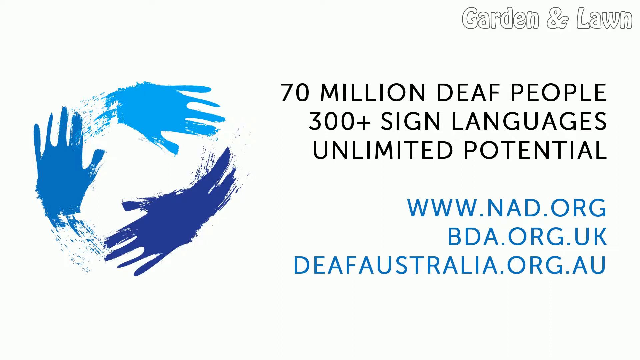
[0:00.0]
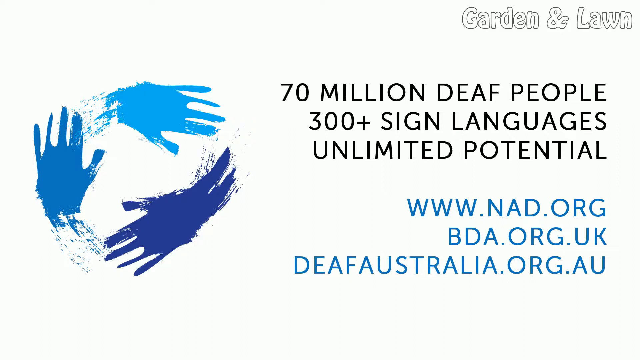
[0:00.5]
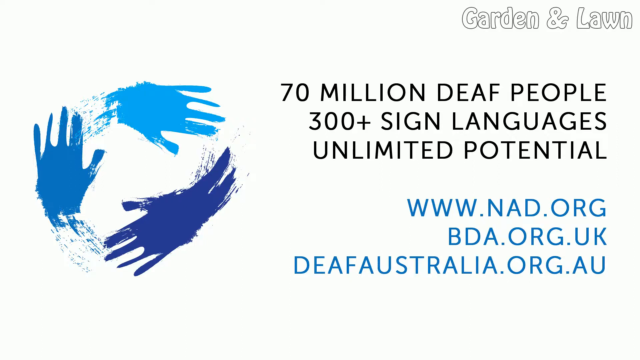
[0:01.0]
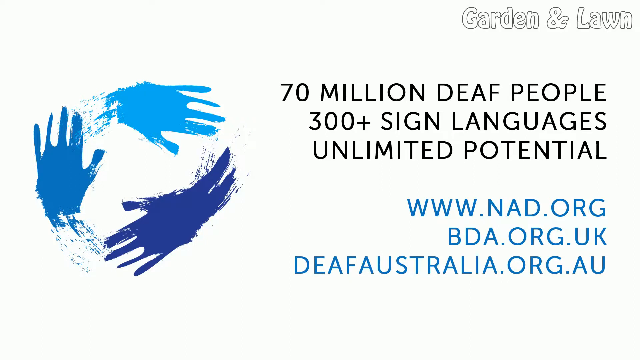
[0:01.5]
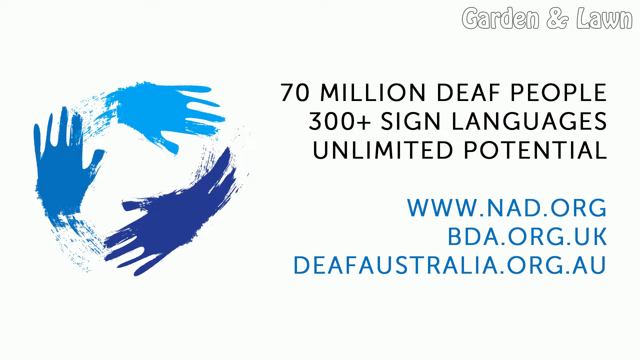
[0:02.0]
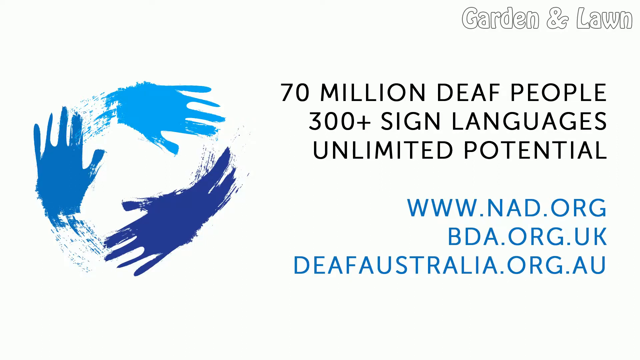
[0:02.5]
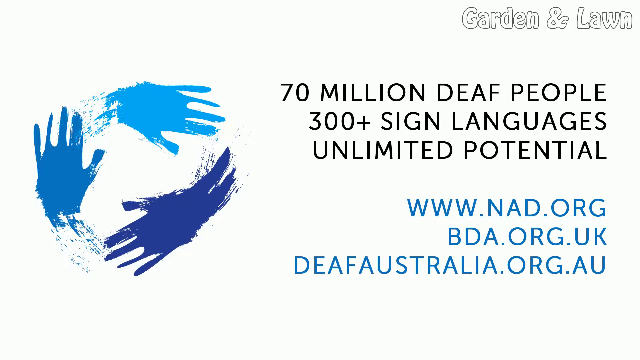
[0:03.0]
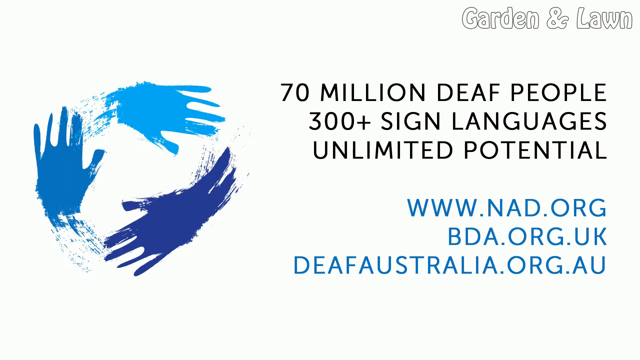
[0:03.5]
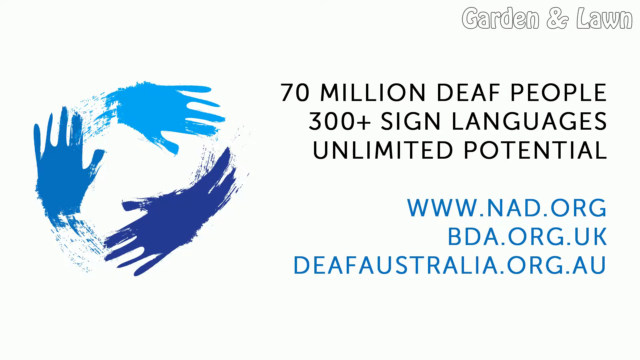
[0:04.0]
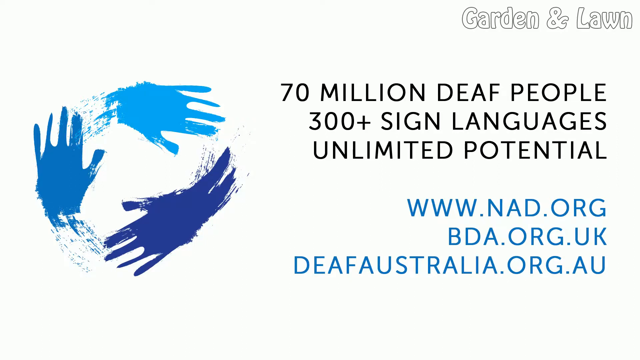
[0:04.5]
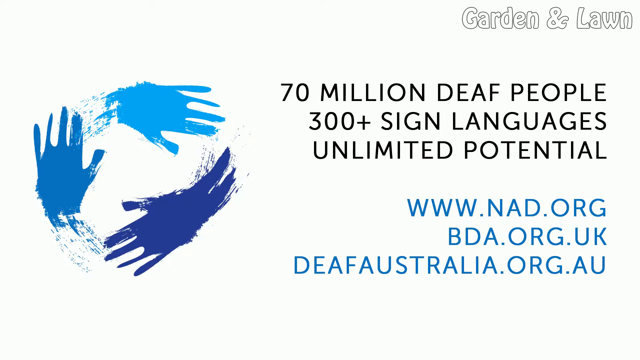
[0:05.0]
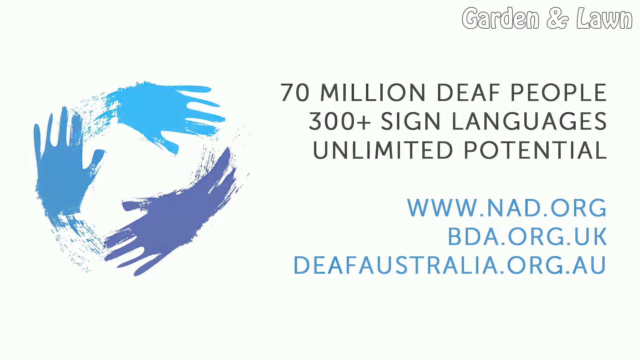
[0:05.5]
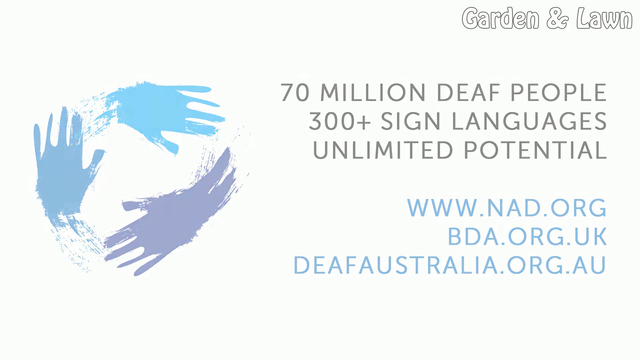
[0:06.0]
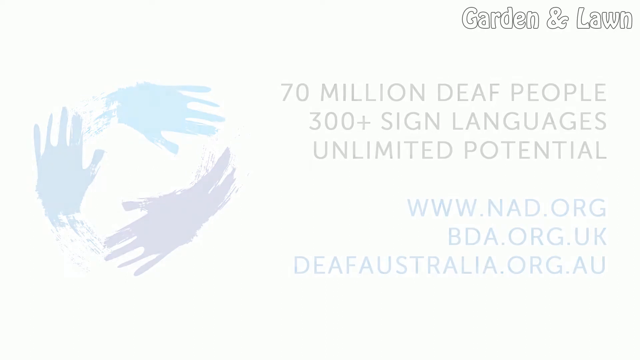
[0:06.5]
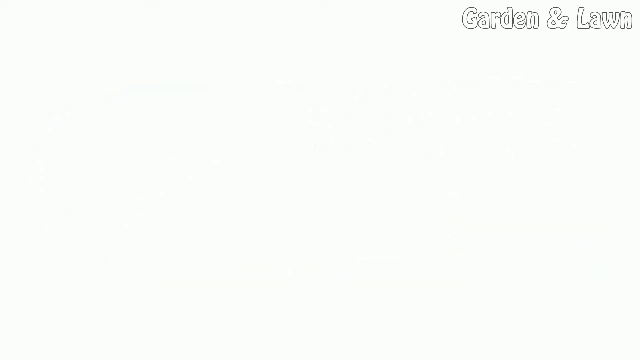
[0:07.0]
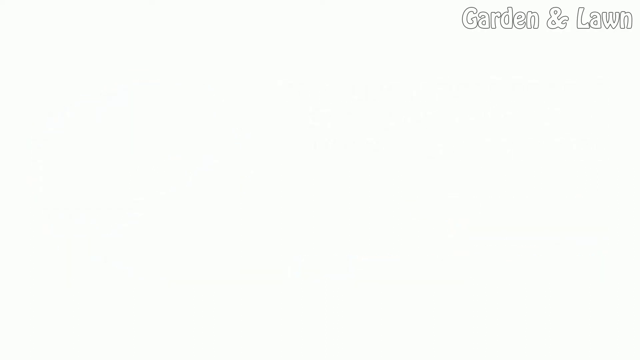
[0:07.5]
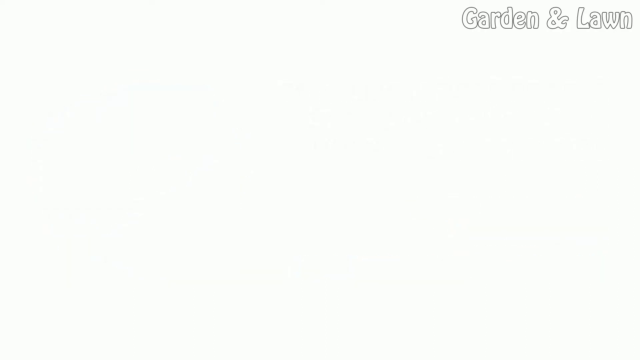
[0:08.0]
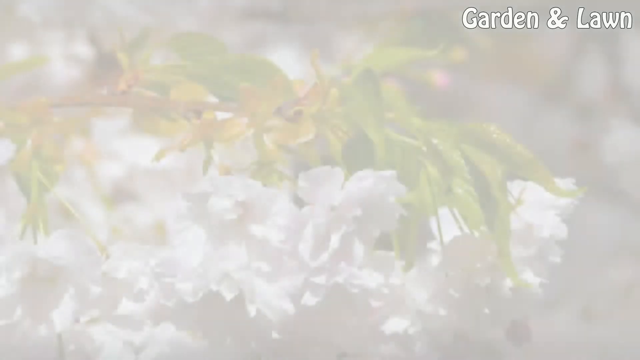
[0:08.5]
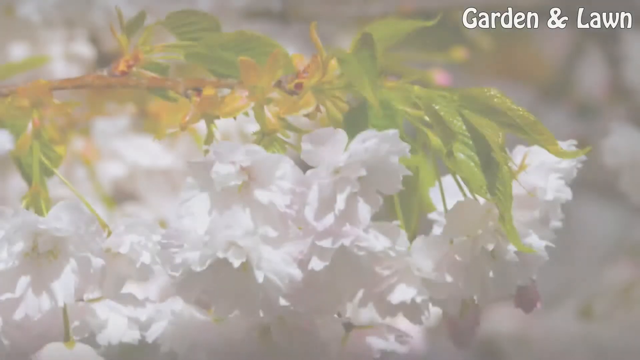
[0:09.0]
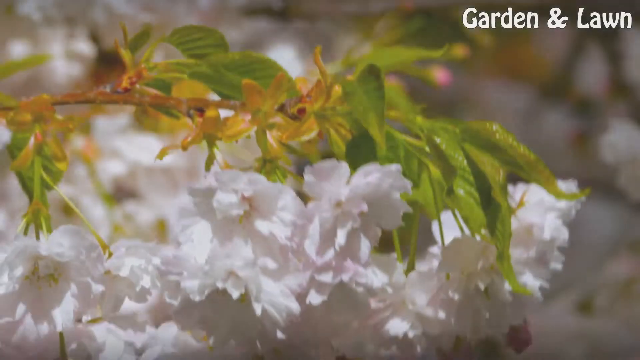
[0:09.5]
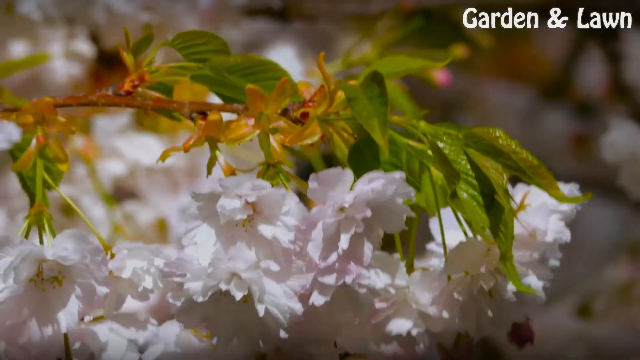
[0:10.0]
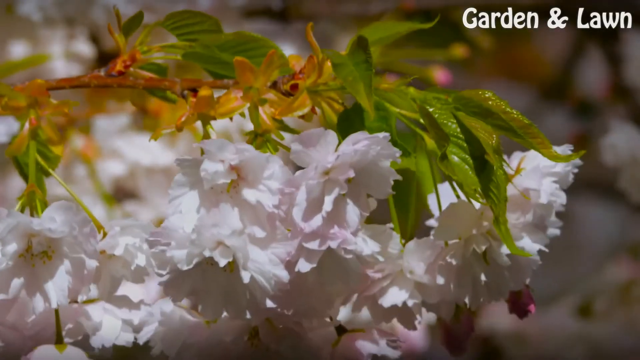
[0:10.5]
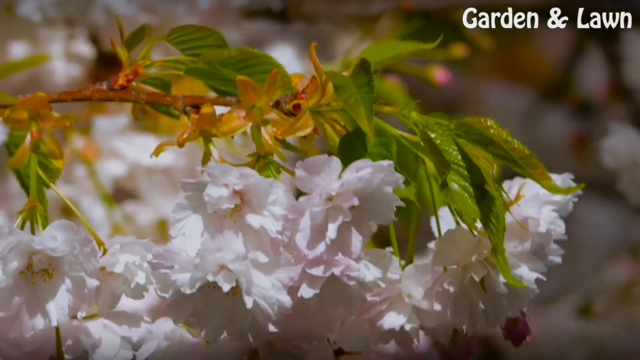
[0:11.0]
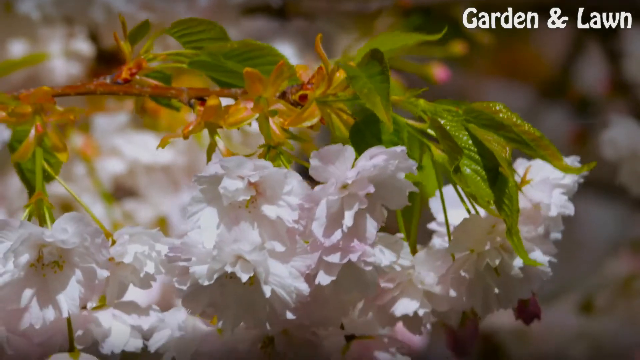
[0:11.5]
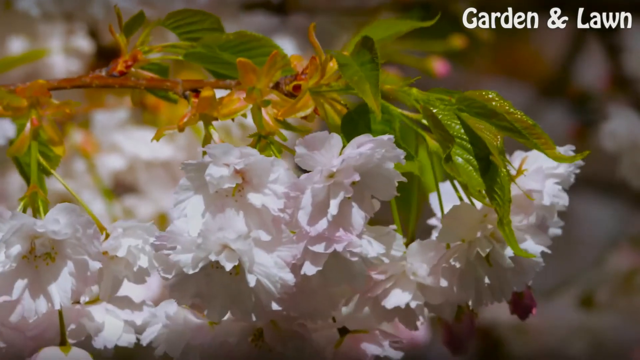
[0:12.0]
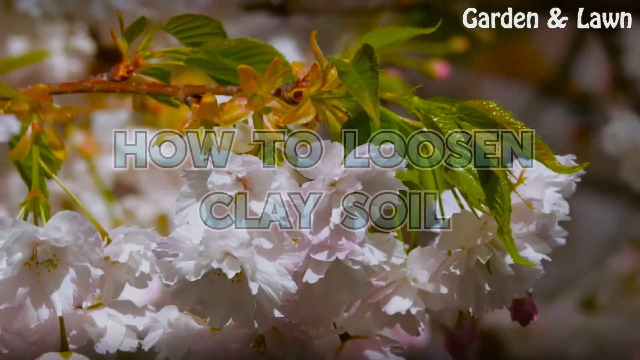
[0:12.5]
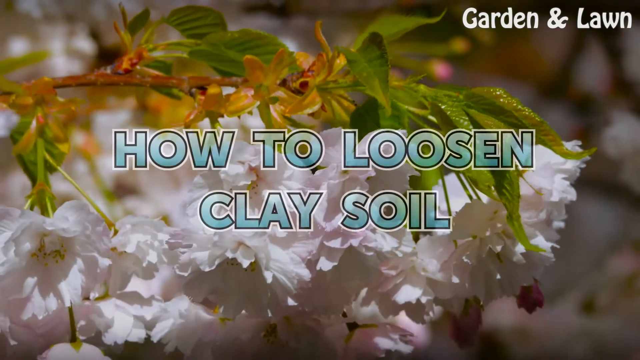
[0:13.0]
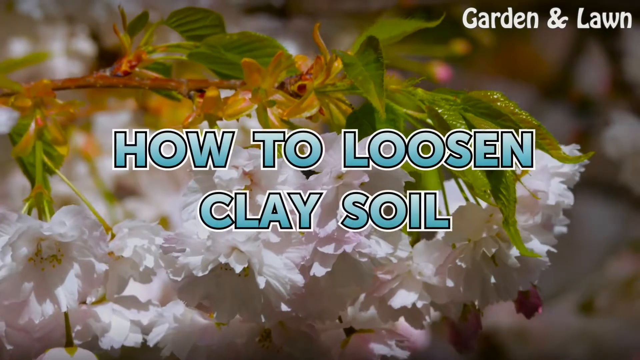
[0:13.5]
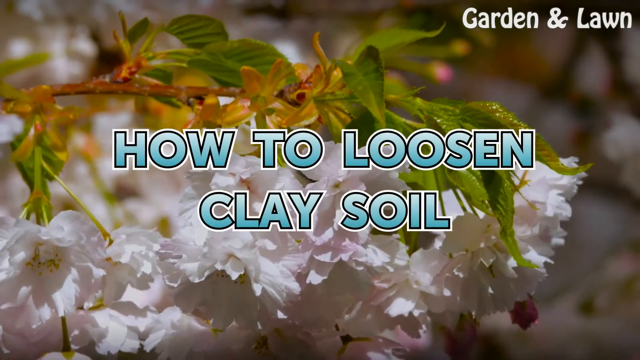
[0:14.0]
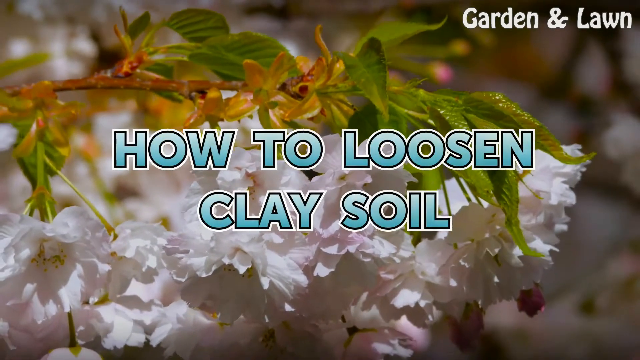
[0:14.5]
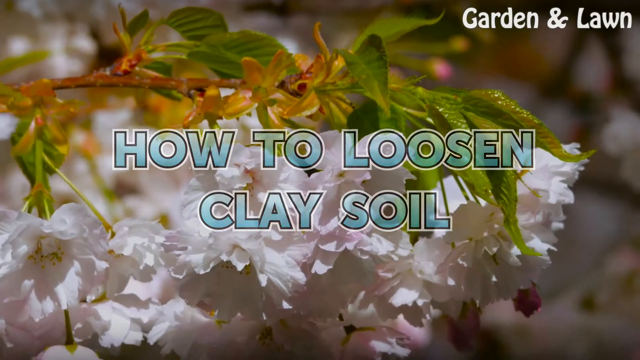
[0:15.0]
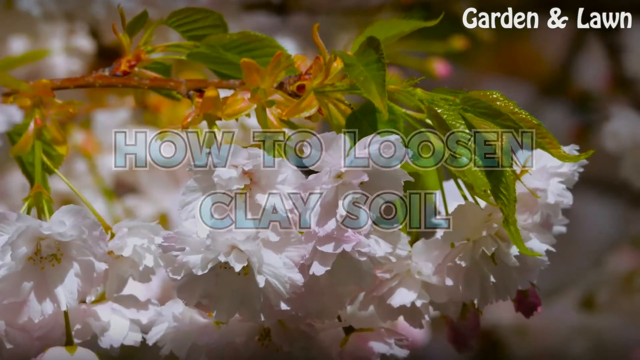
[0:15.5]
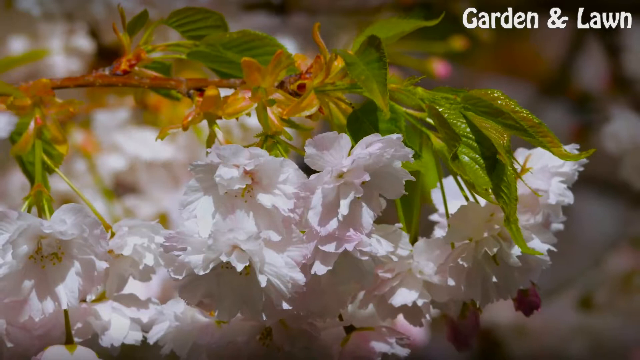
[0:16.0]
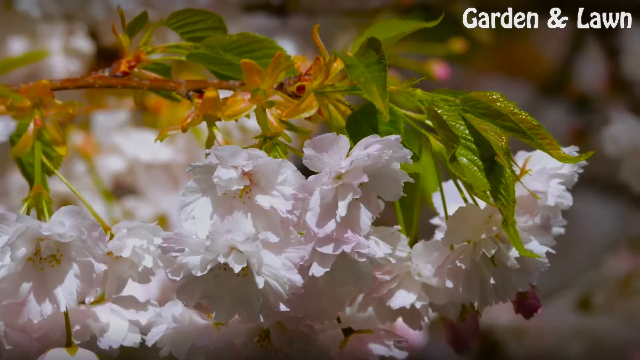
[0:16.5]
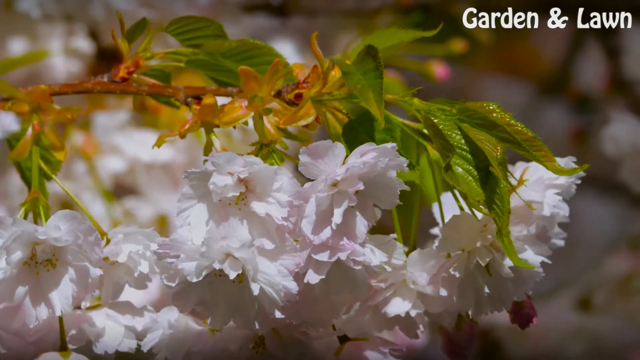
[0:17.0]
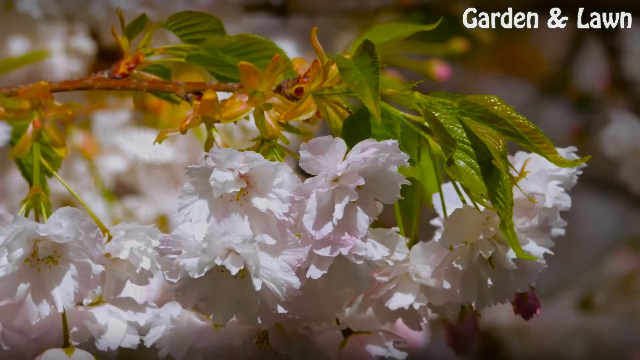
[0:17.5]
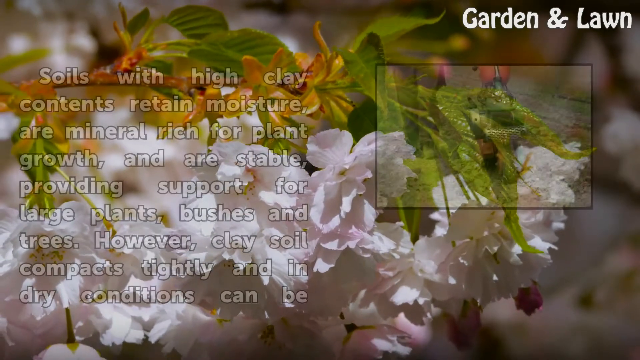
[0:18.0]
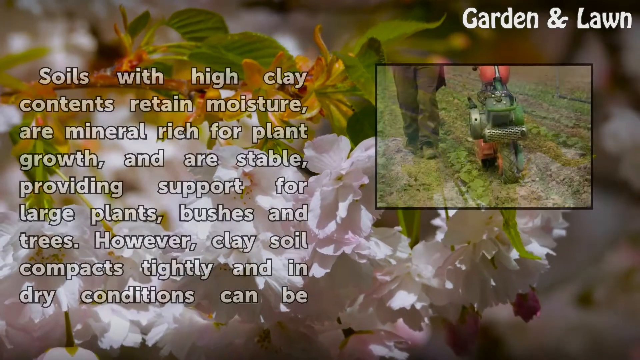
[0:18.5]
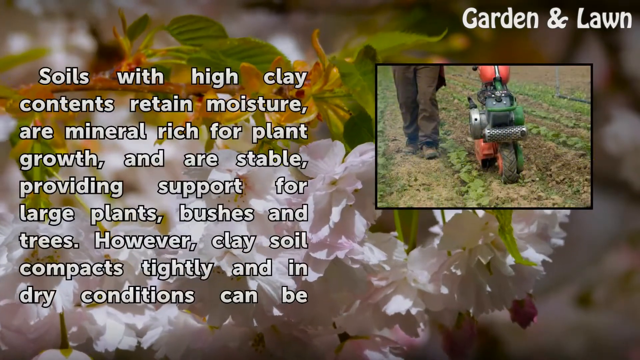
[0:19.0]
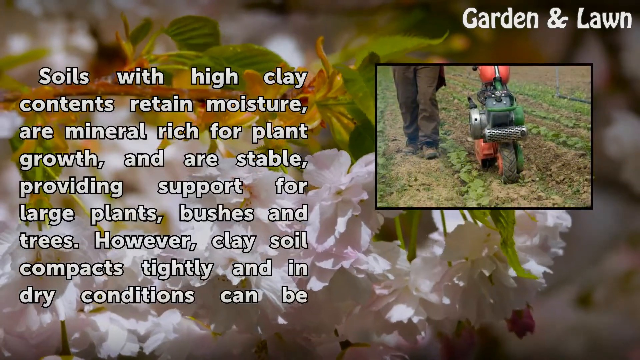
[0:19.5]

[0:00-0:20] The video opens on a screen that appears to be from Deaf Australia. In the bottom right-hand corner, blue lettering on a white background gives the websites "deafaustralia.org.au", "bda.org.uk" and "www.nad.org". In the top right-hand corner, white lettering reads "garden and lawn", and underneath it more text reads "70 million deaf people, 300 plus sign languages, unlimited potential". To the left of this is a symbol made of three hands, like handprints made with paint, that sort of circle together to form a circle; they are in shades of blue: dark blue, medium blue and light blue. This screen gently fades away to a totally white screen, and then a moving picture fades into view: a plant on a branch with green leaves, with flowers underneath that have white petals in a shape almost like a rose. There are quite a lot of them, and they hang down, swaying gently up and down very slowly in the breeze. Text then fades into the middle of the screen with the flower as the backdrop: "how to loosen clay soil". That text fades very slowly away, and more text slowly forms into view: "soils with high clay contents retain moisture, are mineral rich for plant growth, and are stable, providing support for large plants, bushes, and trees. However, clay soil compacts tightly and in dry conditions can be".